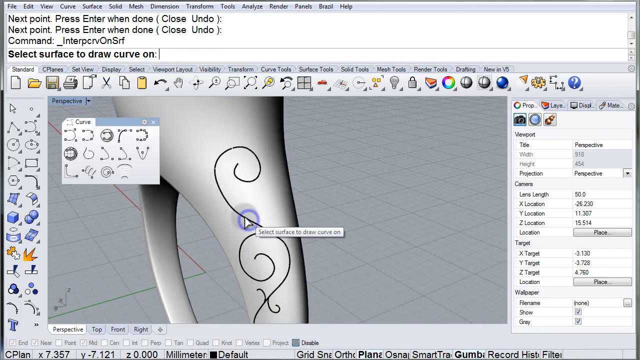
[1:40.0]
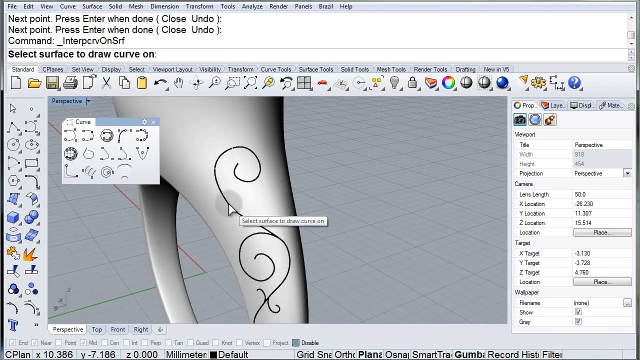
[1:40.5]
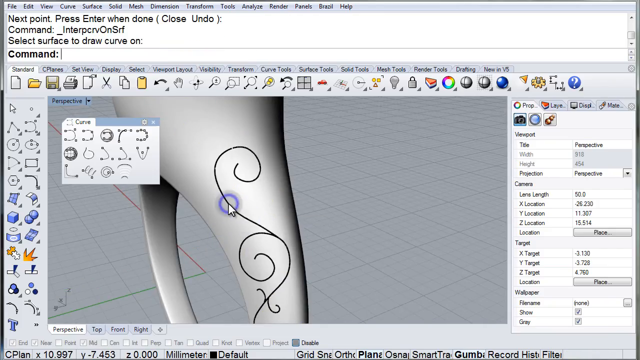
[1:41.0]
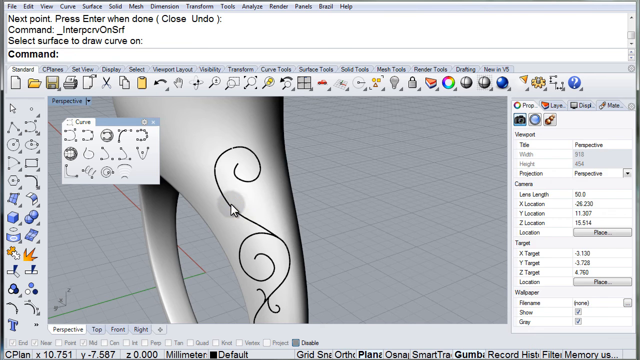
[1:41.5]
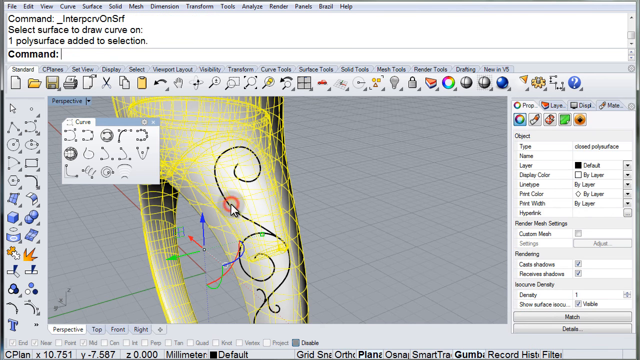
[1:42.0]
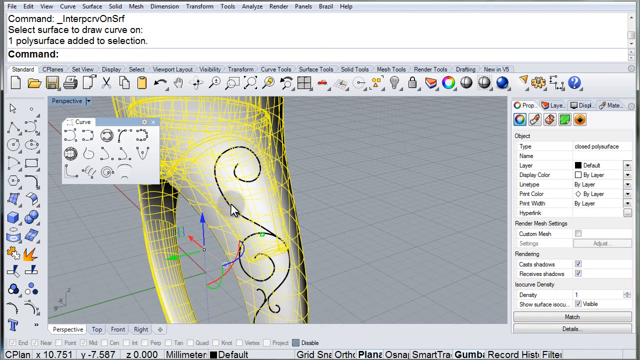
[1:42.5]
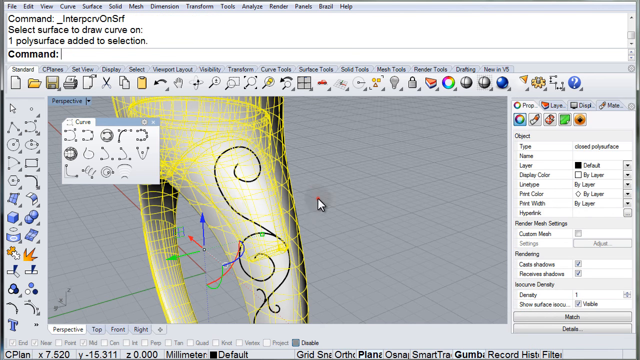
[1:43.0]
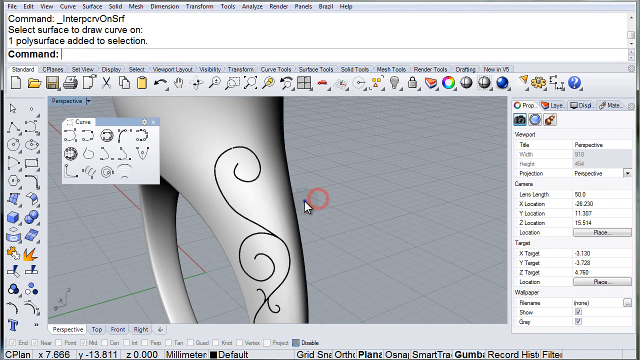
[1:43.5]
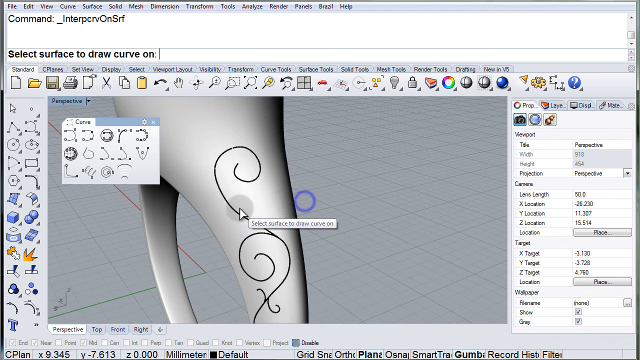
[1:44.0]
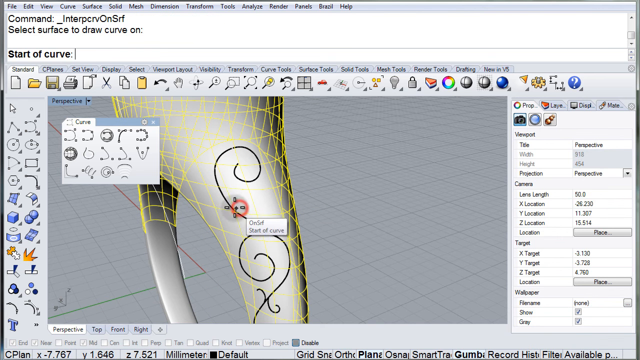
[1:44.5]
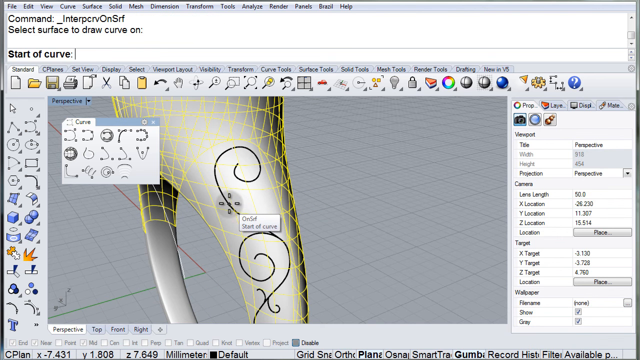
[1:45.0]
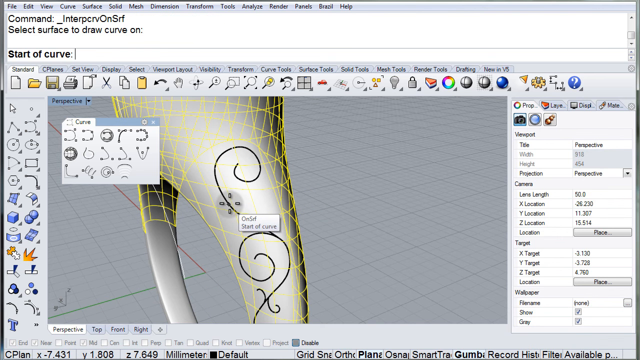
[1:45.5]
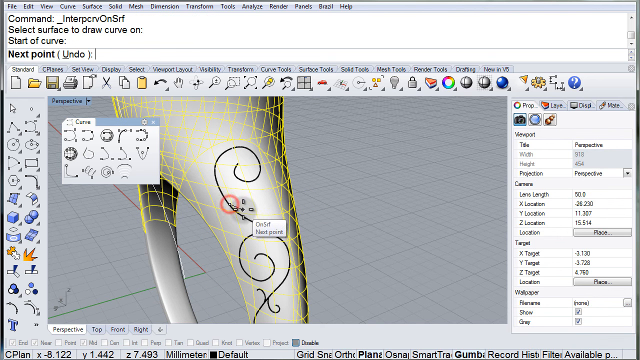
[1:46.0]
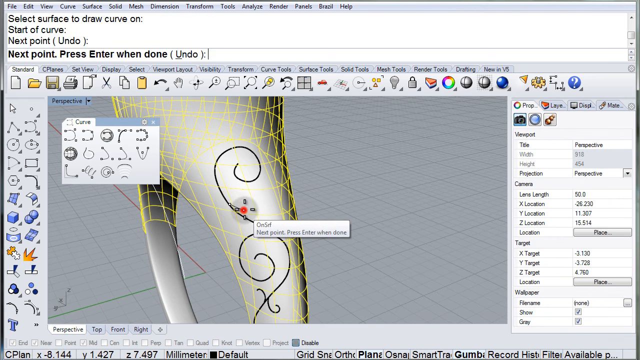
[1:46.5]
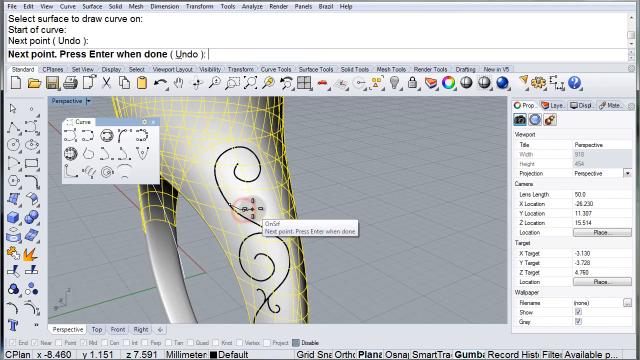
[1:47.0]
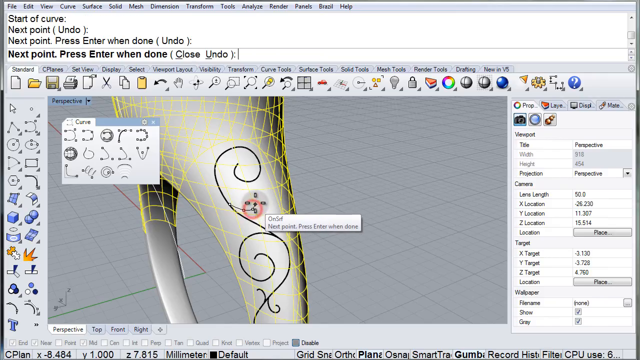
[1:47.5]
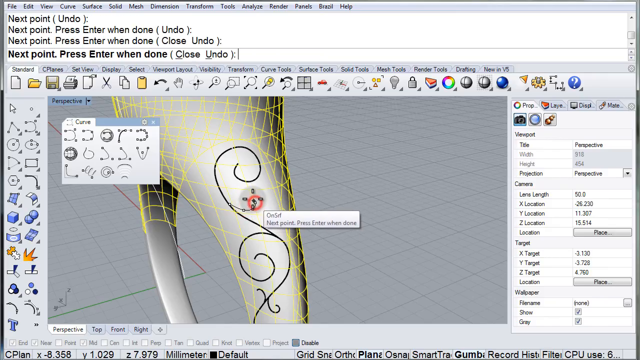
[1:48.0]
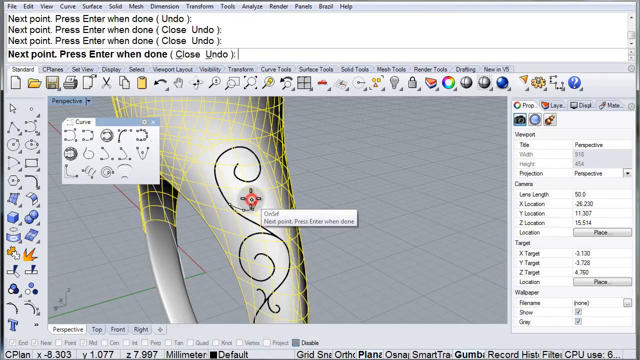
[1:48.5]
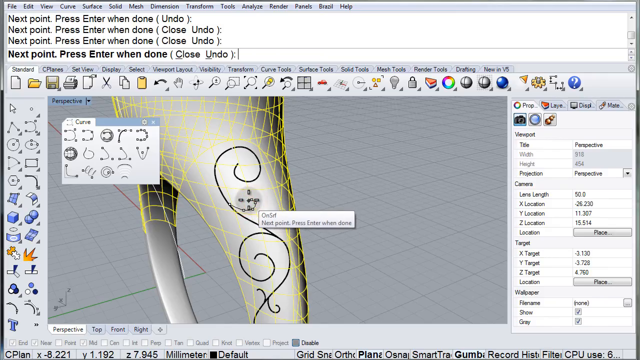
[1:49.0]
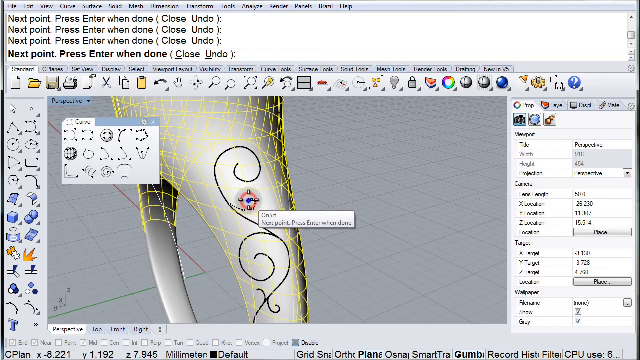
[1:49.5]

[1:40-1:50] The mouse keeps clicking to make spiral shapes on the ring. Now, when it first clicks, instead of the fairly simple yellow perpendicular grid made up of squares, a confusing grid appears with many more lines at different angles, along with a set of axes in the space in the center of the ring: a yellow or green arrow pointing to one side, a red arrow pointing to the other side, and a blue arrow pointing up, like X, Y and Z axes. The mouse clicks off to the side of the ring and then back on the ring, and all of that disappears, leaving the same yellow grid as before. The mouse then goes to about the center of the newly drawn curlicue and starts a smaller curlicue in a little hook shape pointing up and to the right.